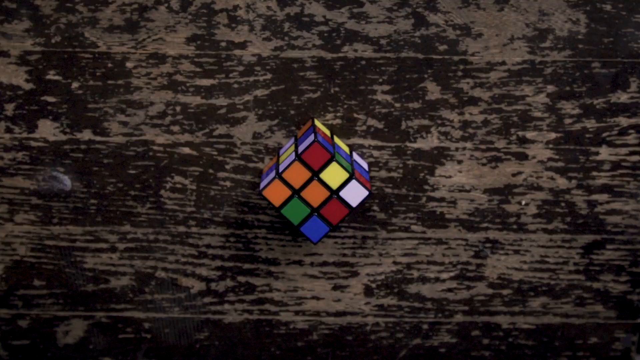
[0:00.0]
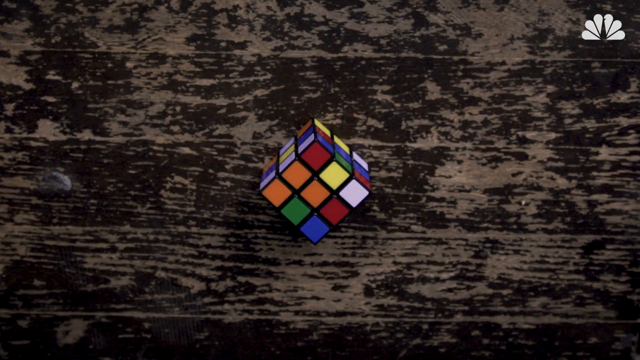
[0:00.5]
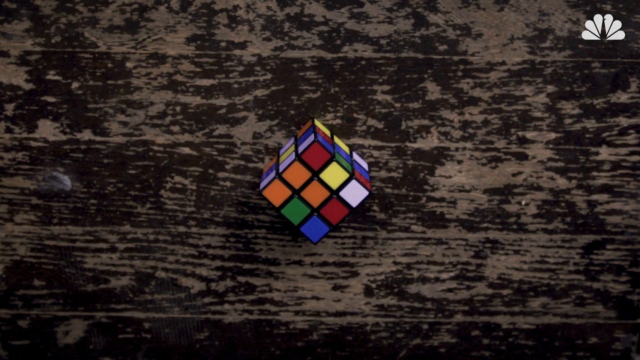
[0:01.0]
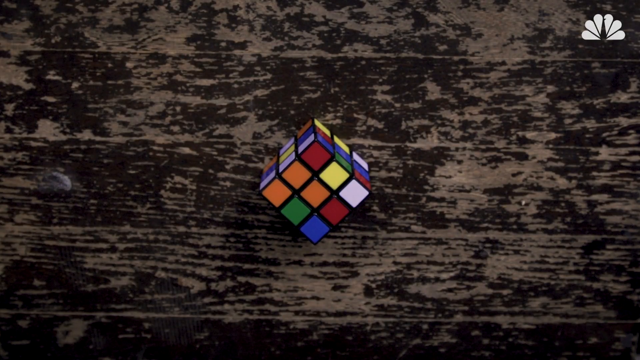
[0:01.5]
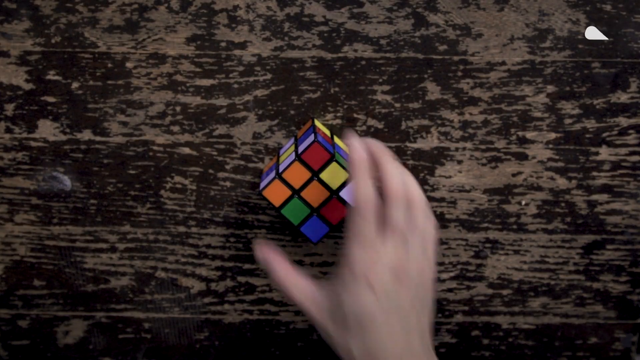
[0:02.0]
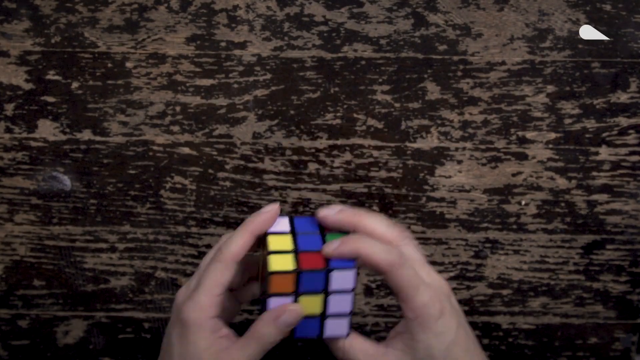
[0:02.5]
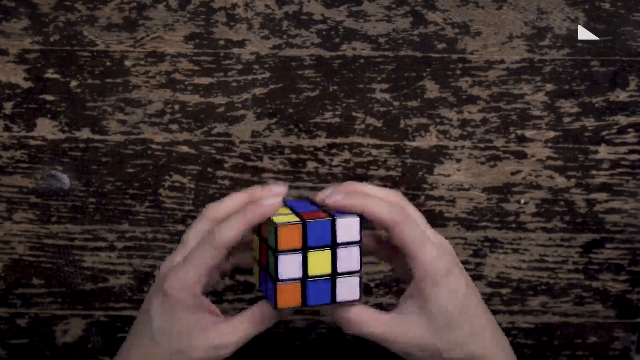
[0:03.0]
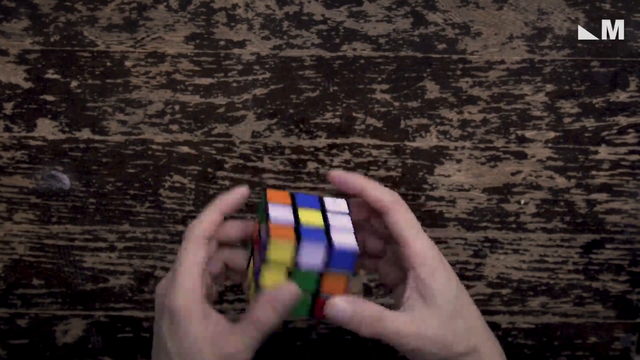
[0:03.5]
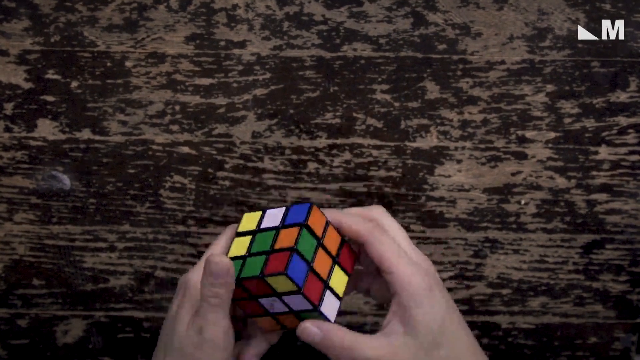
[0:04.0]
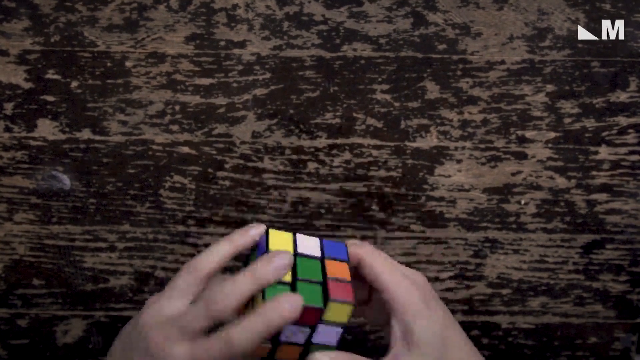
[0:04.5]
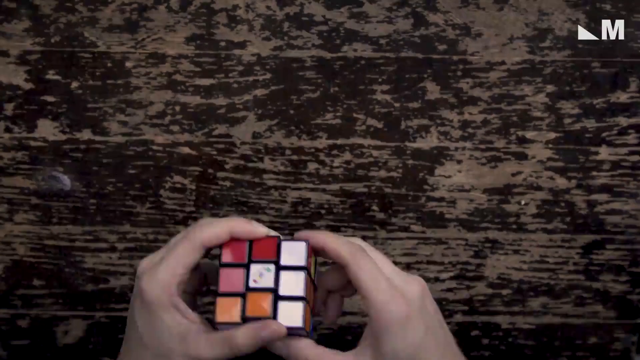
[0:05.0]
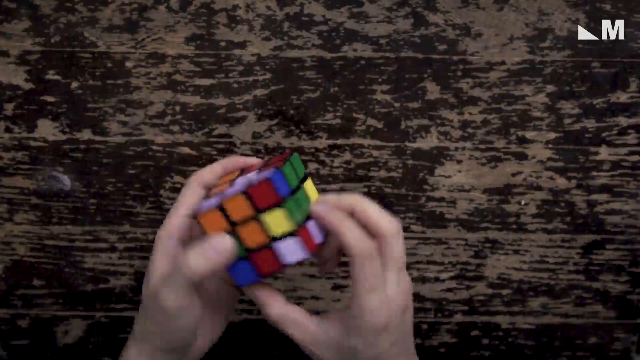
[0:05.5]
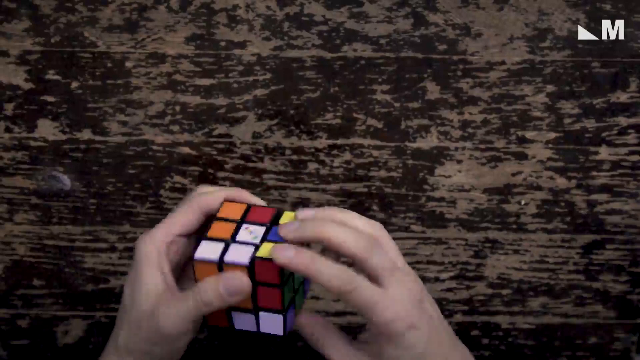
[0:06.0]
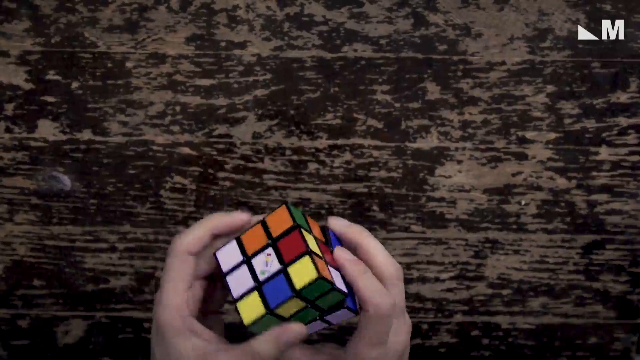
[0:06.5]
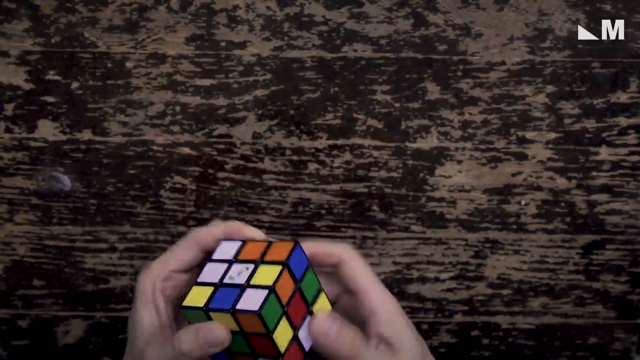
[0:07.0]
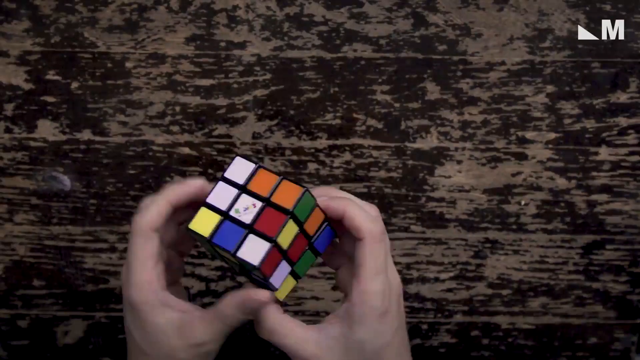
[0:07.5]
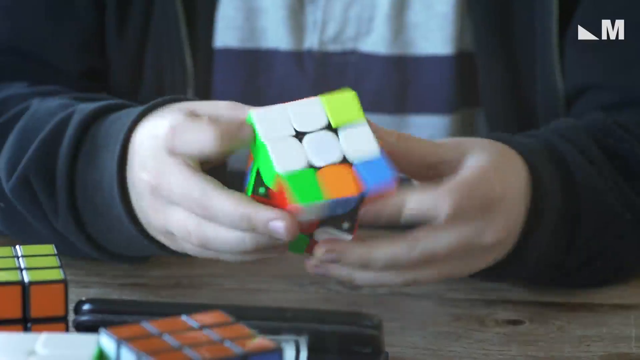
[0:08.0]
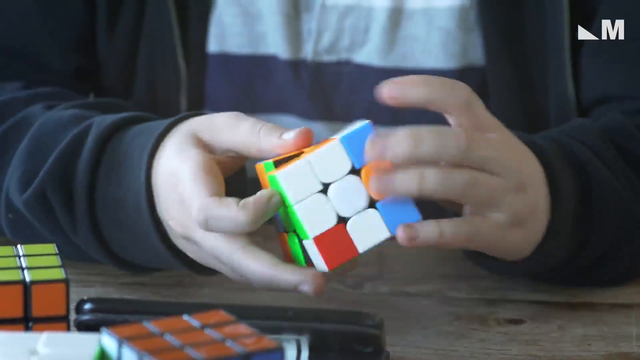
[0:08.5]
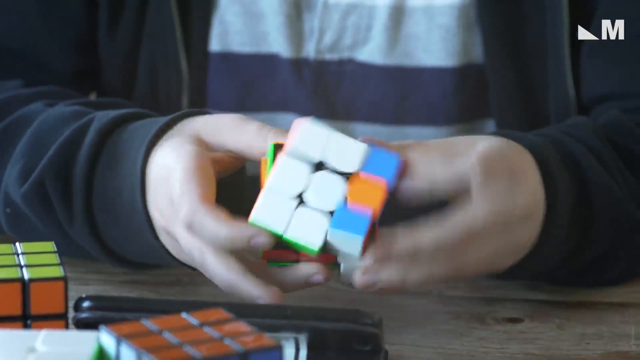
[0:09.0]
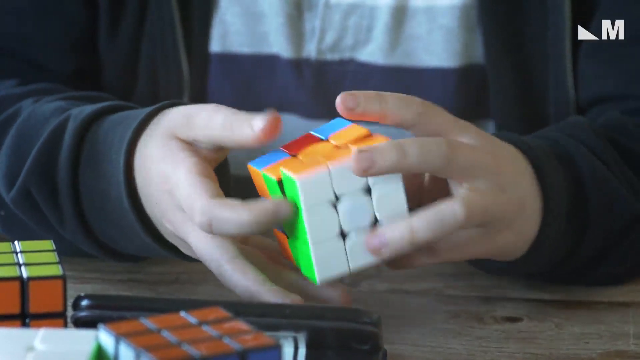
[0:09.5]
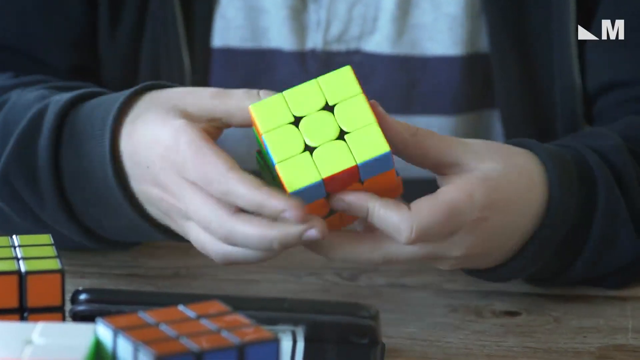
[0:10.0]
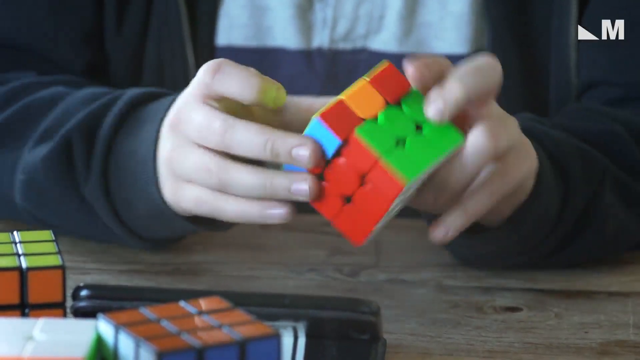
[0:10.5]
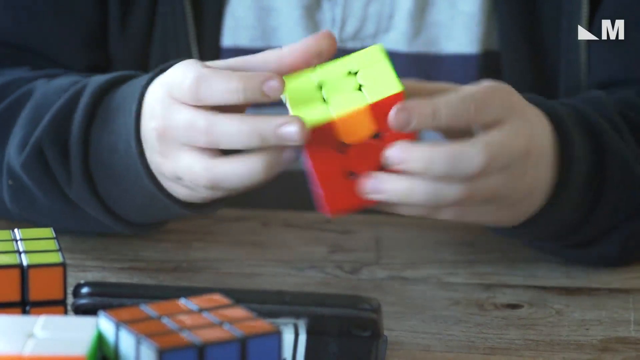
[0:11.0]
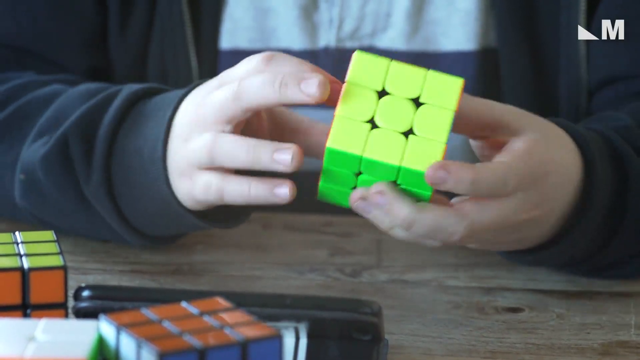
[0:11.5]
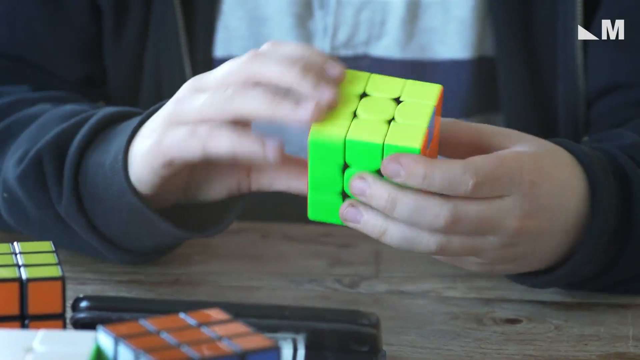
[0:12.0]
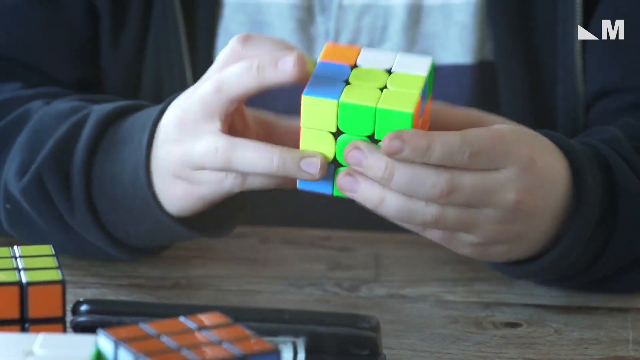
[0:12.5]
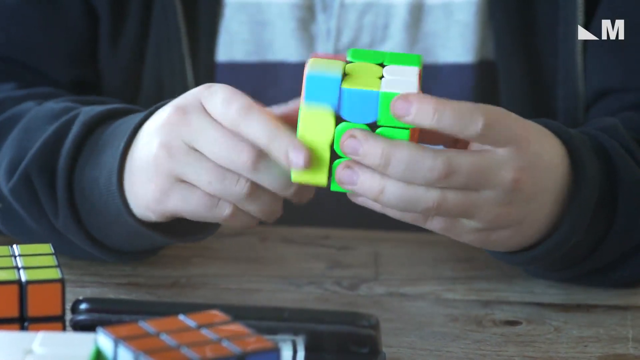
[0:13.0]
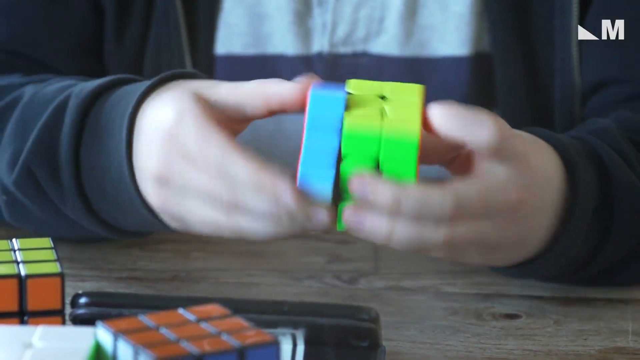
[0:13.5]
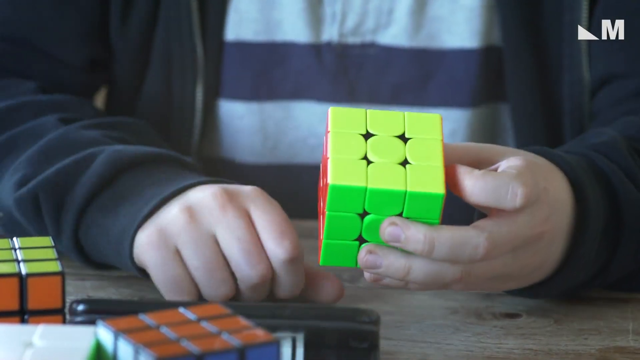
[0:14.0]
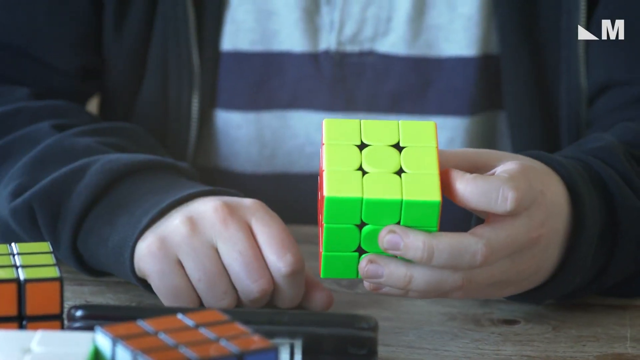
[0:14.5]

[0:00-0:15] A jumbled, multicolored Rubik's Cube is shown, and text at the top reads "an algorithm of how to solve a Rubik's Cube." The video opens from a top angle, giving more of an aerial view, as someone spins the cube very quickly, with lots of twirling motion. It looks like the person is sitting at a table, a wood table that appears rather rough. The cube is shown from two different angles as it is being solved; the other is more of a close-up of what looks like the person's hands, from a front angle.